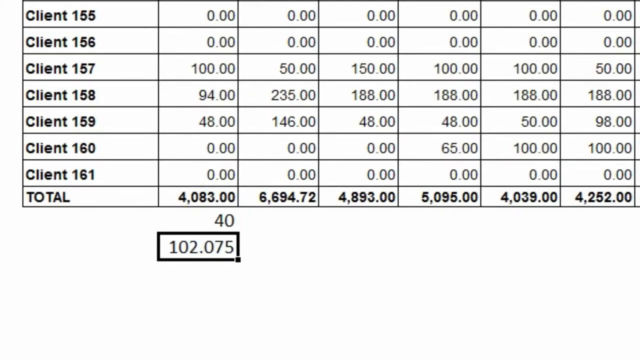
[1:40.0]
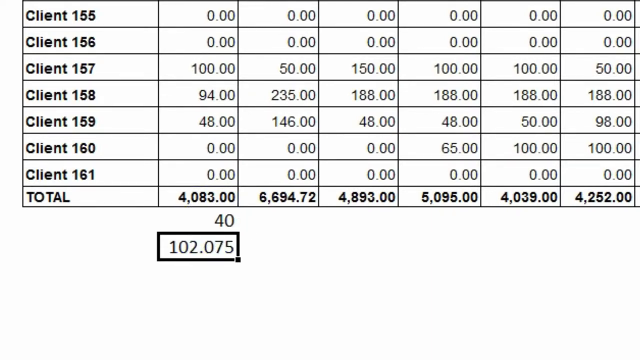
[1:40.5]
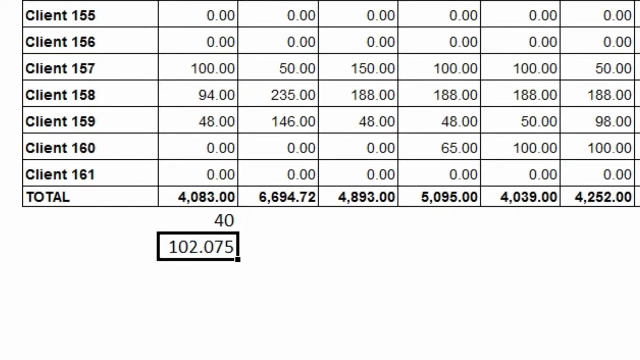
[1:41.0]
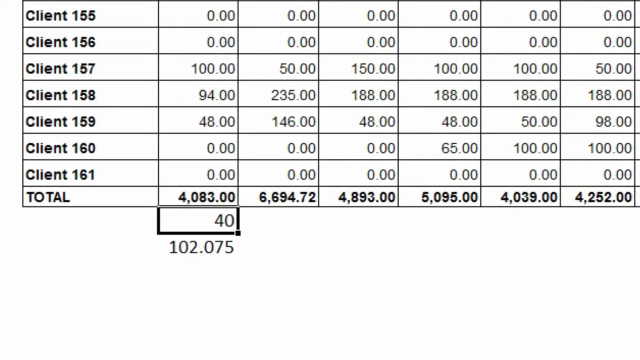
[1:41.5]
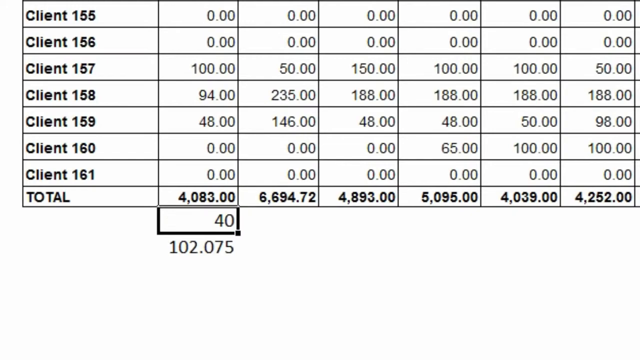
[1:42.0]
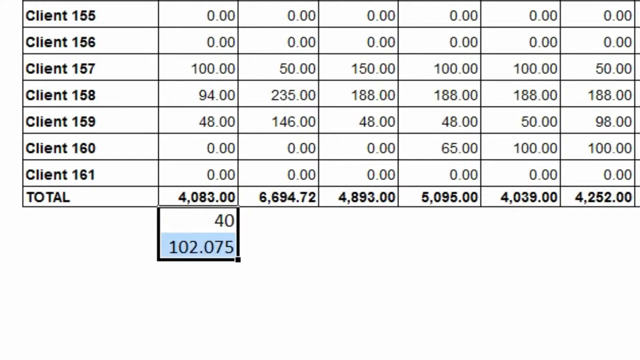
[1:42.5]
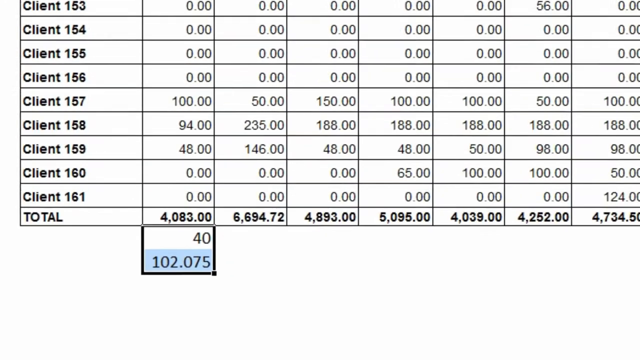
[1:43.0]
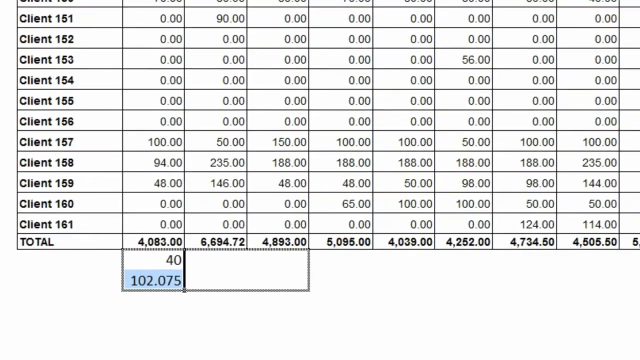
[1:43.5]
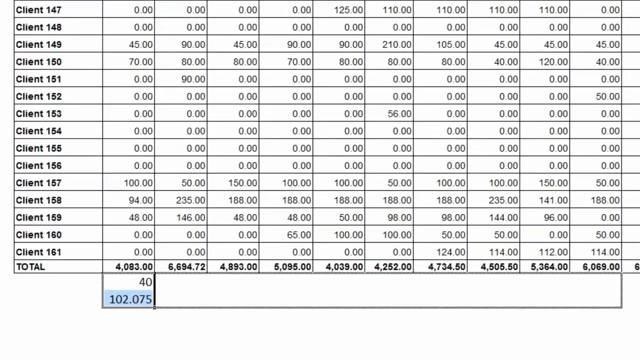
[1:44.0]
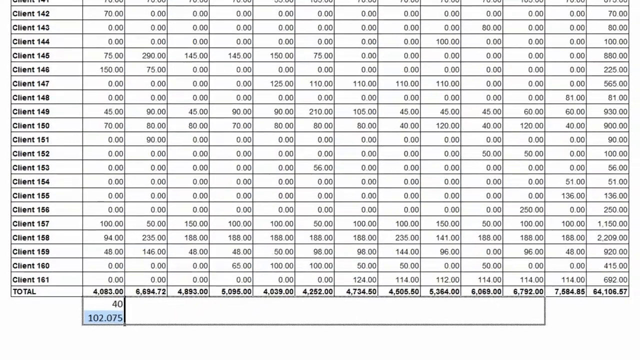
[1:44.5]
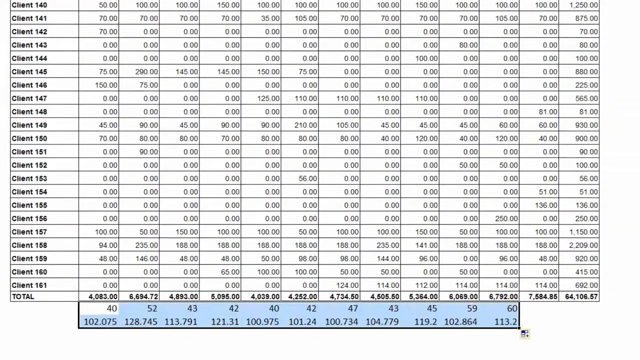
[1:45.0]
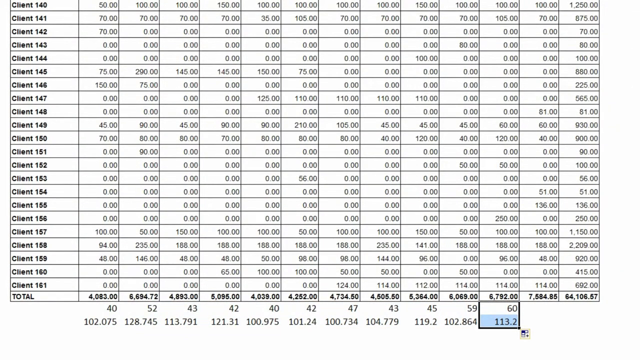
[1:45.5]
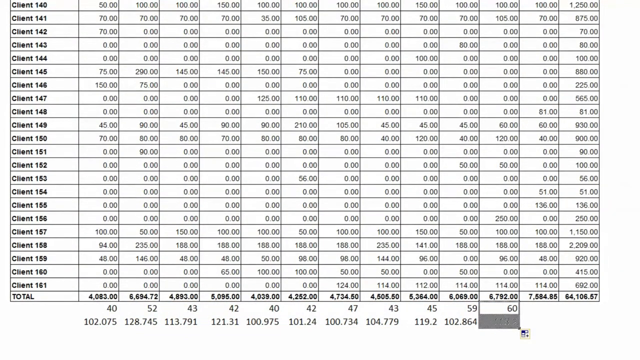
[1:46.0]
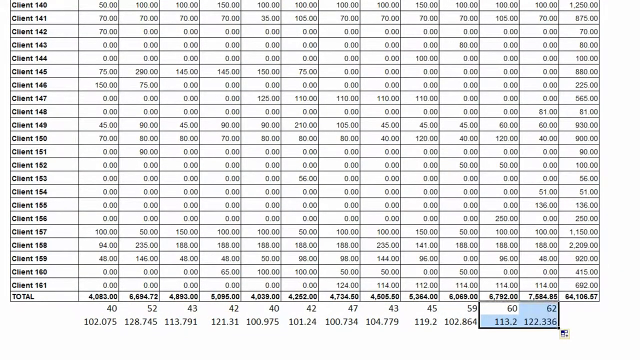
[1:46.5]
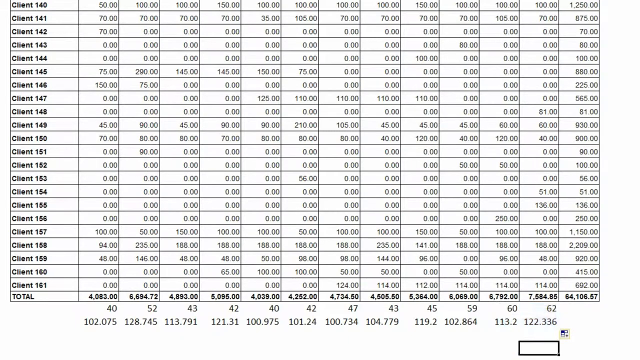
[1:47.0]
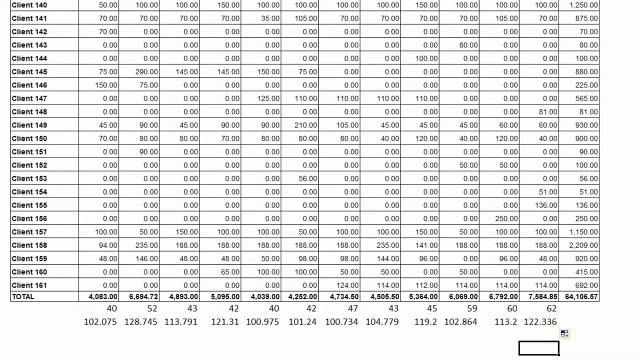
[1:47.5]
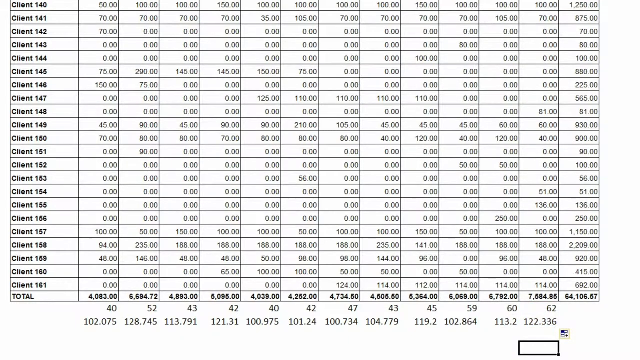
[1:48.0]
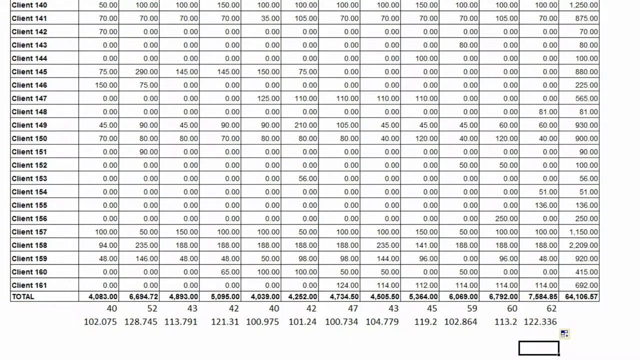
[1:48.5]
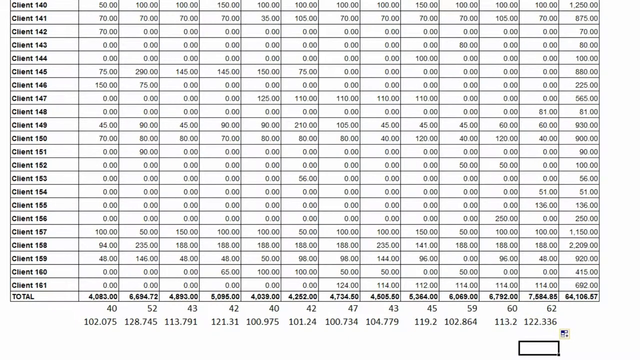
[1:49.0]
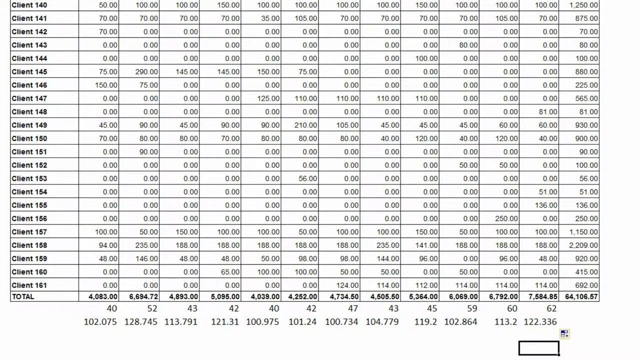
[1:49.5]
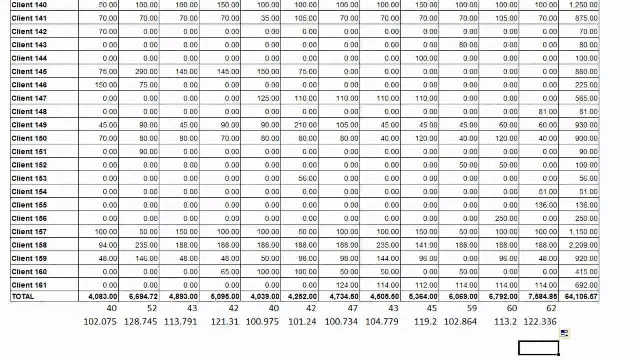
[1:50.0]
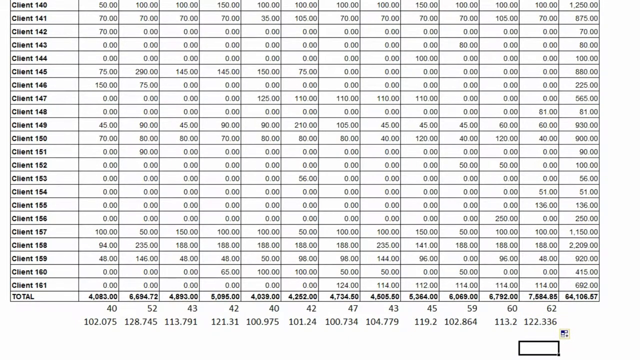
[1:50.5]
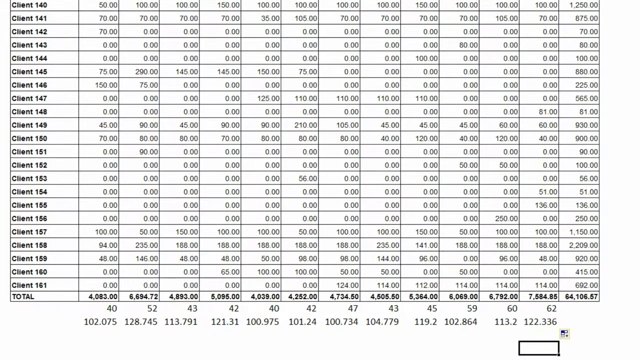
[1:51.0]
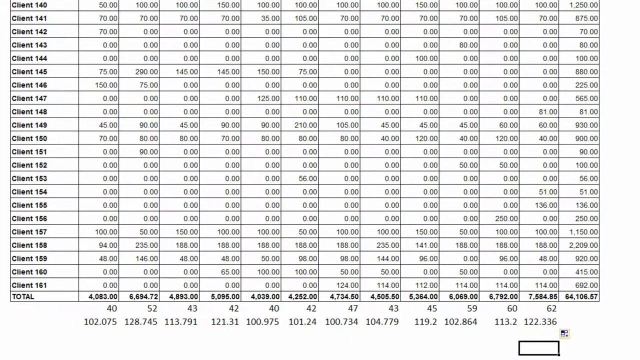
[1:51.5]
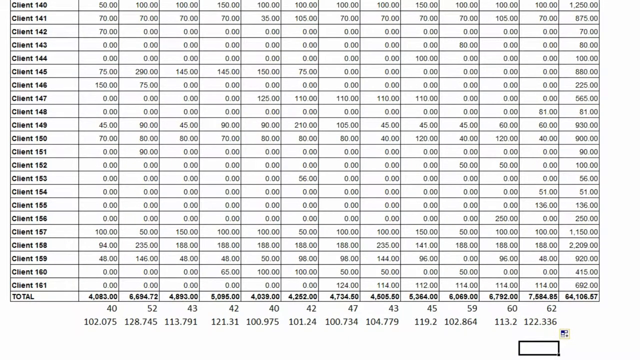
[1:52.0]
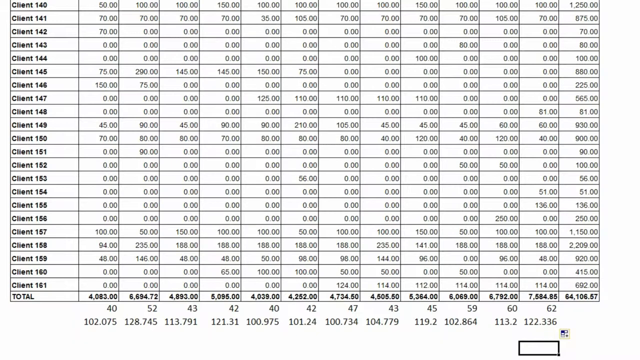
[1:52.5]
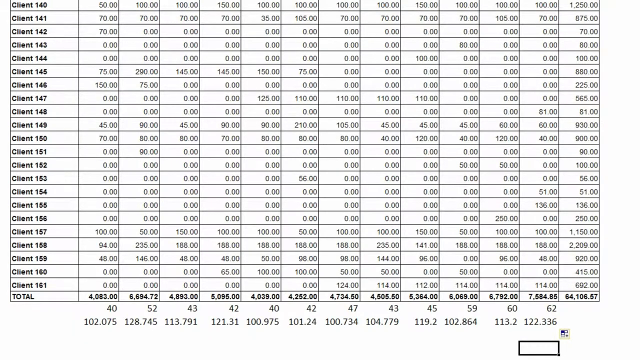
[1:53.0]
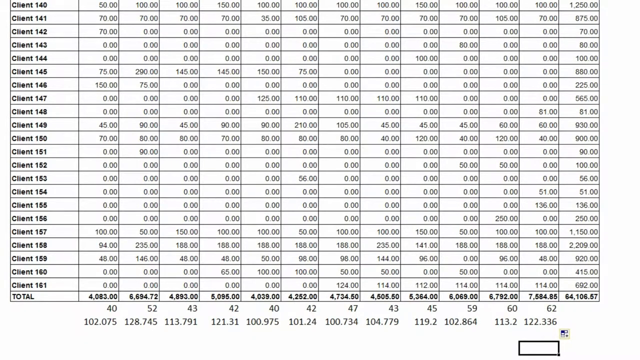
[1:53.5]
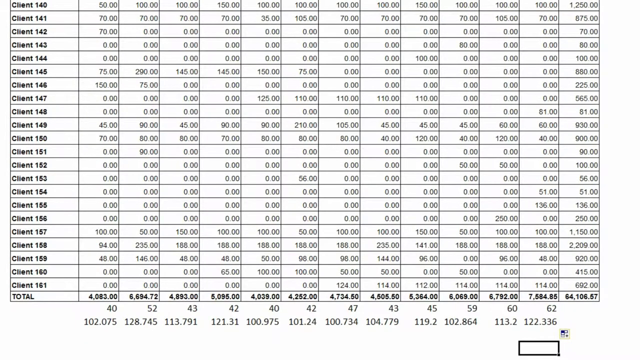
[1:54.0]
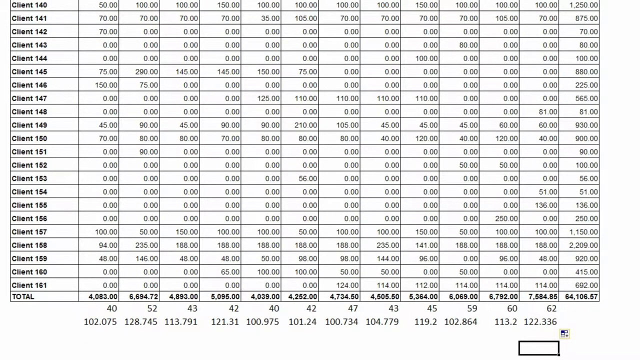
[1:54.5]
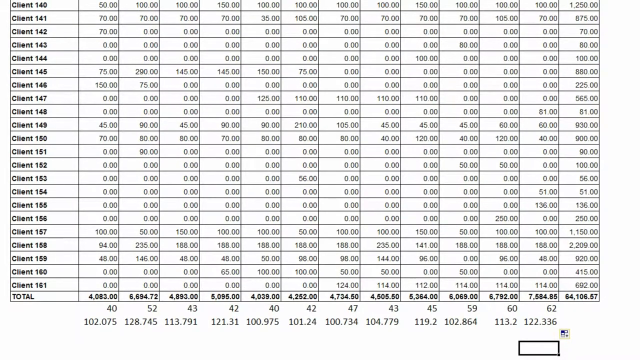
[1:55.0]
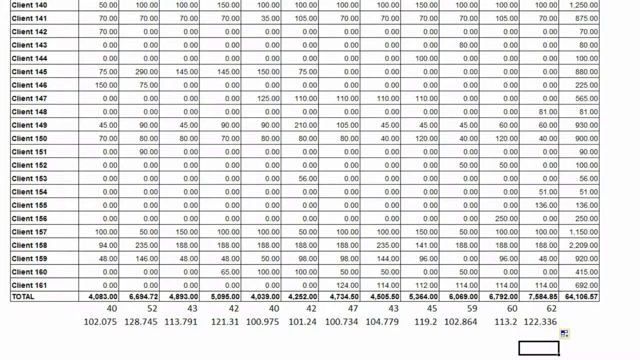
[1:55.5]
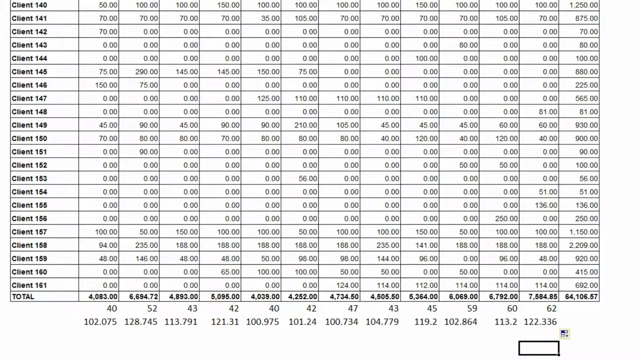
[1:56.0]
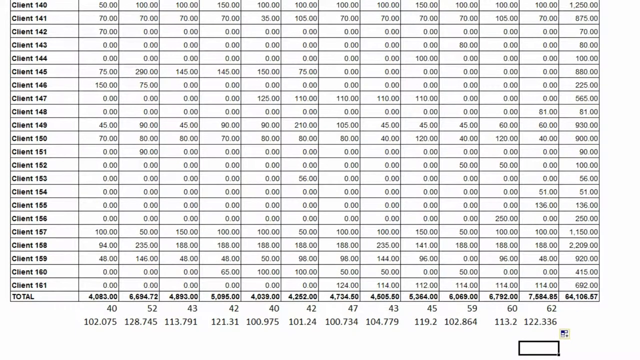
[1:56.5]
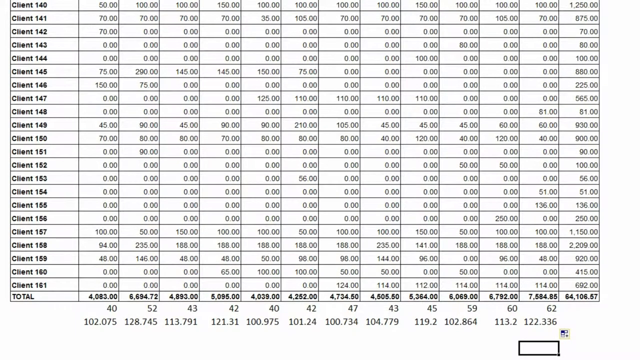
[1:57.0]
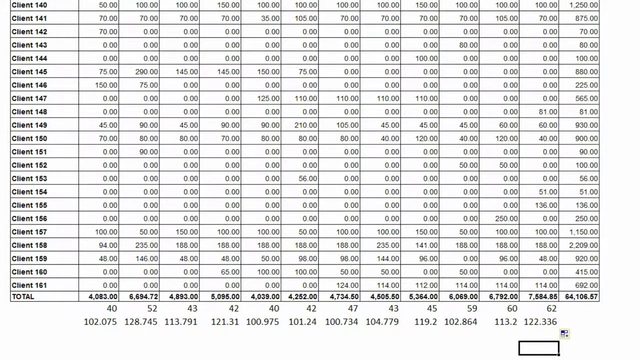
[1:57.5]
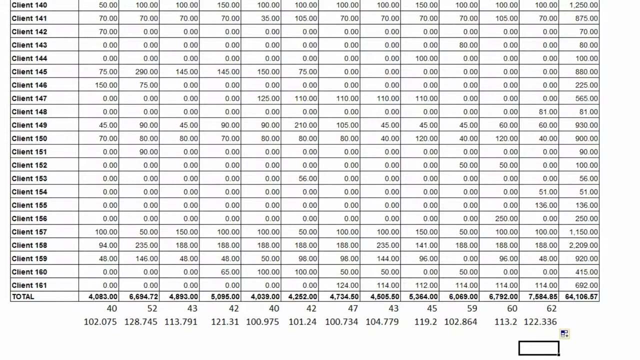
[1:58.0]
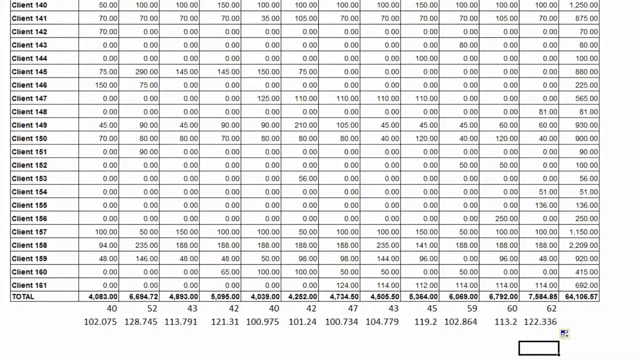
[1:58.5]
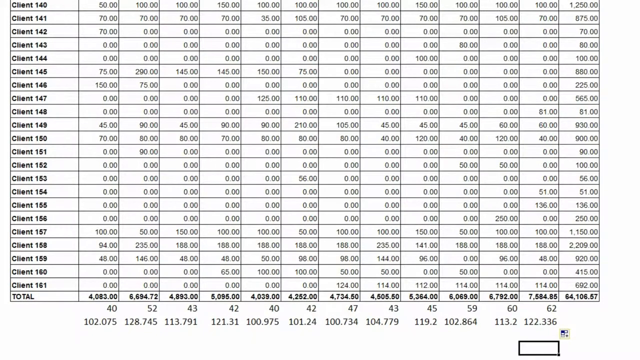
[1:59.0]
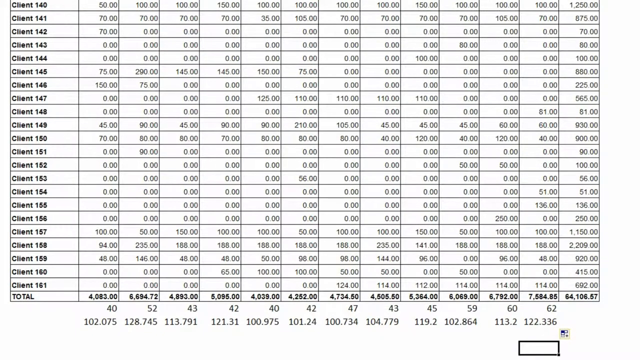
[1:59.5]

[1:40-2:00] The Microsoft Word-style spreadsheet for a cleaning business lists client 1 through client 161, with the months across the top, a total at the bottom and a total on the side. The column totals appear to be monthly earnings, while each row seems to show what each client had per month. Having opened a function window and typed something, the person gets 102.075 at the bottom of a column. They then stretch out across a column from 42 to 62, and numbers appear at the bottom of each. The monthly totals seem higher than what the values in the columns would add up to.